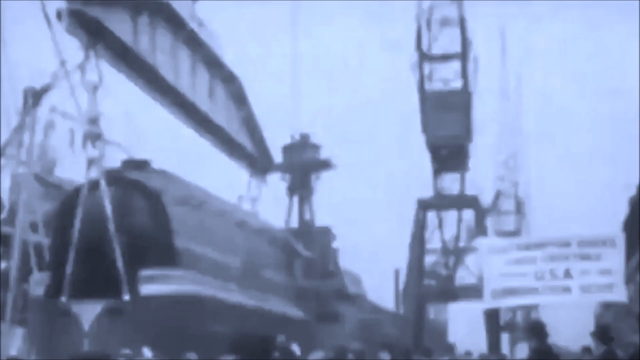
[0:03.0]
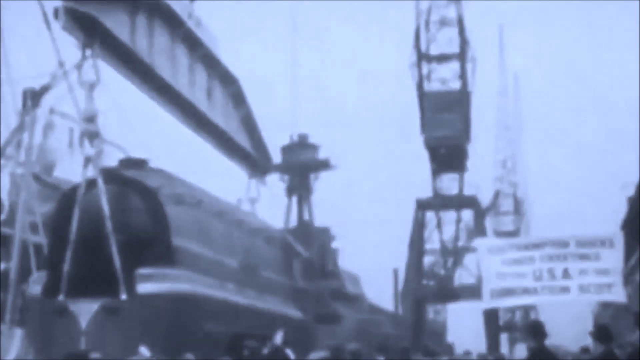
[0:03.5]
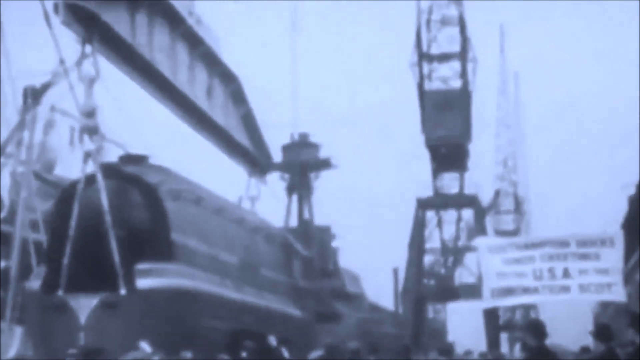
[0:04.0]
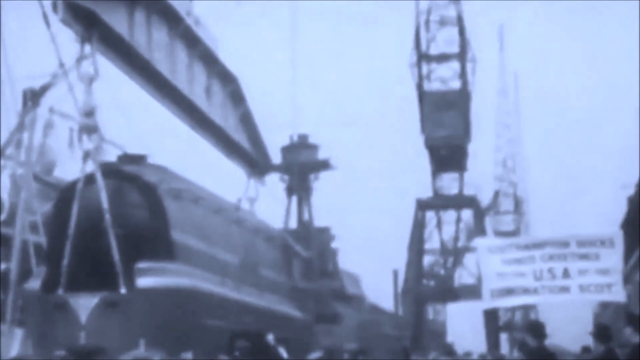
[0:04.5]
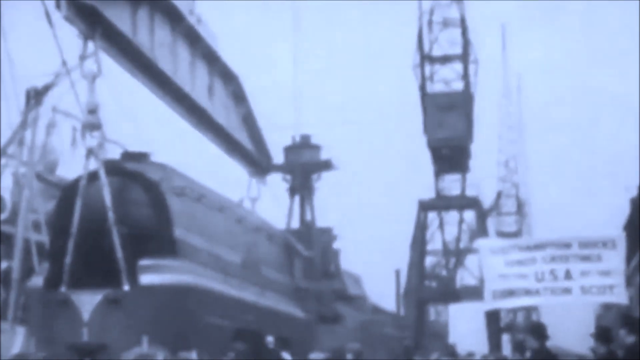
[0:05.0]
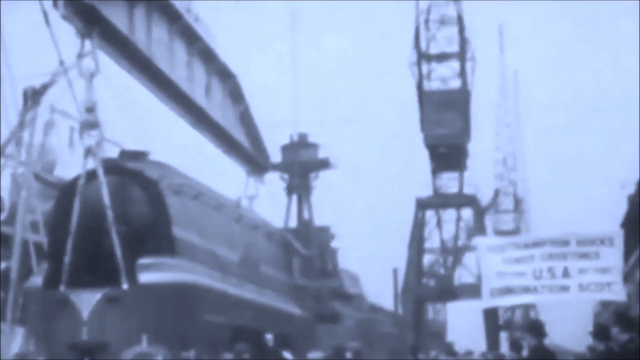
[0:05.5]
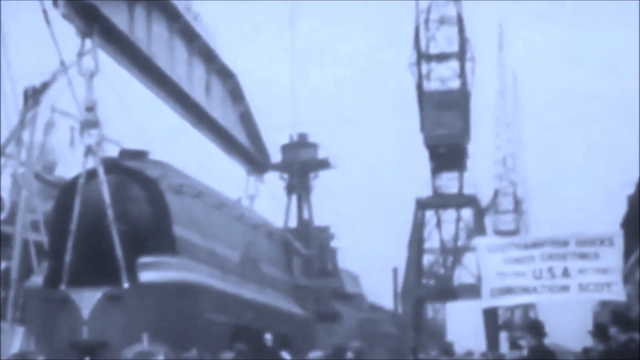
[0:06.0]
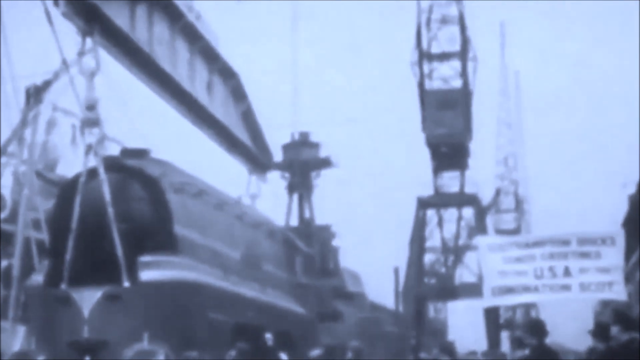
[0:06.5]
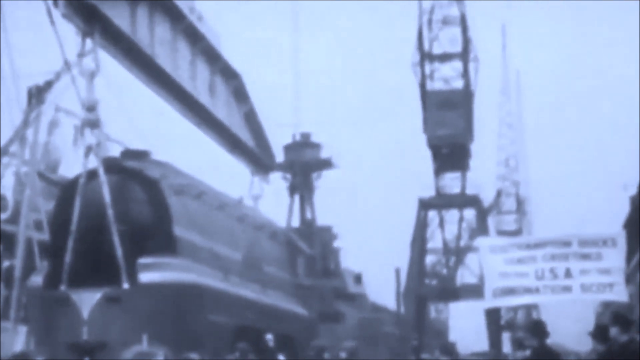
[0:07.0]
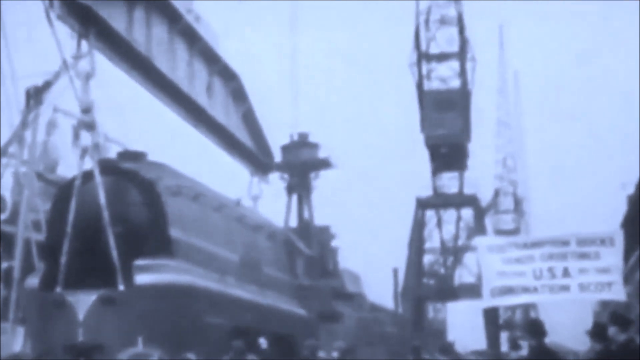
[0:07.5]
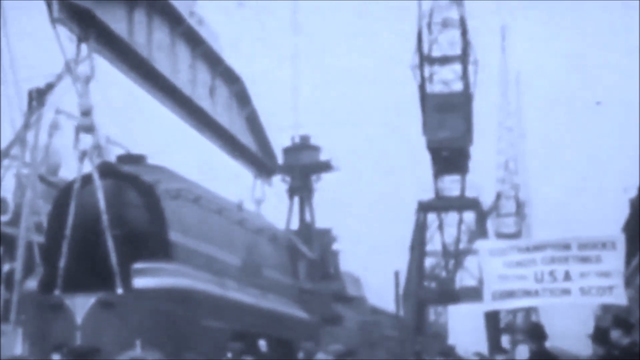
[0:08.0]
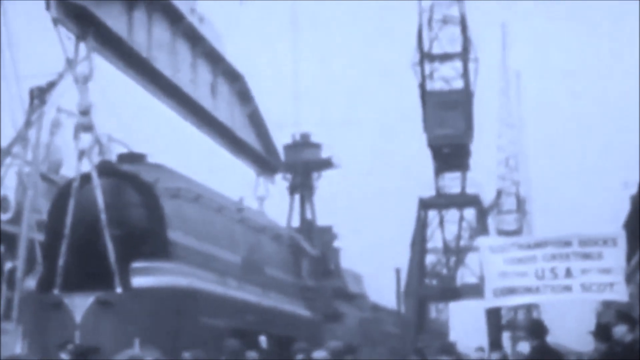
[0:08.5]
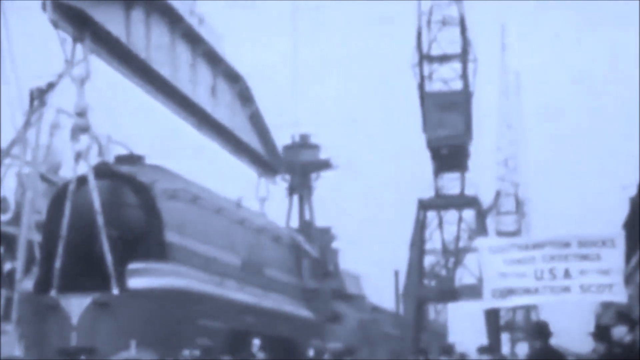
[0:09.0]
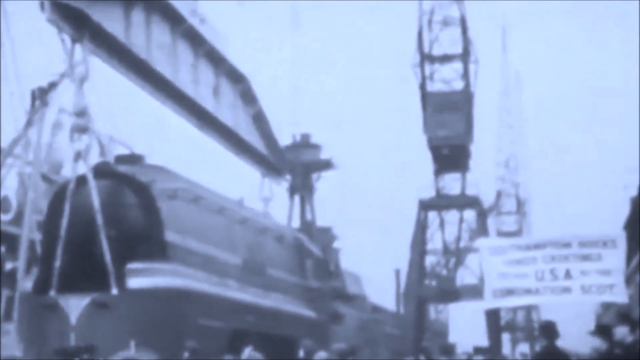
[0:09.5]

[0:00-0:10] The video is black and white and appears to have been made in early times, perhaps sometime in the 20th century. The setting is an industrial area, with a building in the upper right corner in the background. At the very front of the screen is a sign whose text is blurred except for the center, which reads "USA." The scene is presumably near water. A big pulley is wrapped around an enormous cylindrical machine of some sort, which could be a train, part of a boat or a very large tank; it is unclear what it is. On the left side of the screen, the object is lifted into the air and moved toward another object that appears to be a ship, possibly to be loaded onto it. That object has a fenced-off railing area farther off, and it is hard to see what lies beyond it.